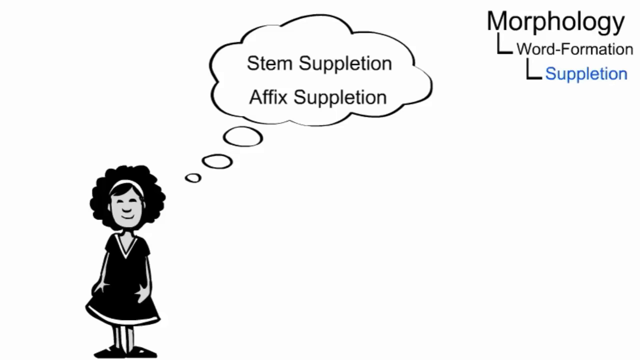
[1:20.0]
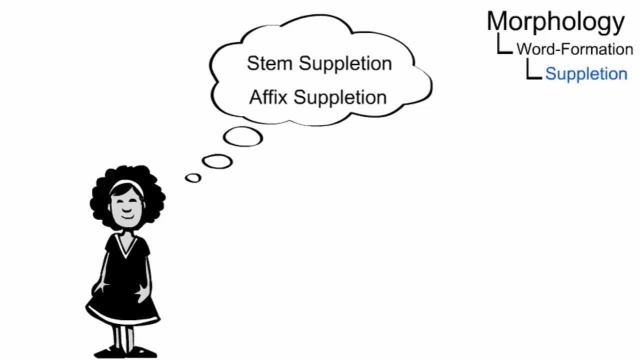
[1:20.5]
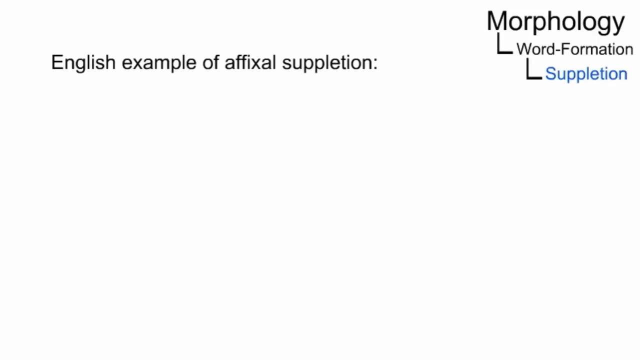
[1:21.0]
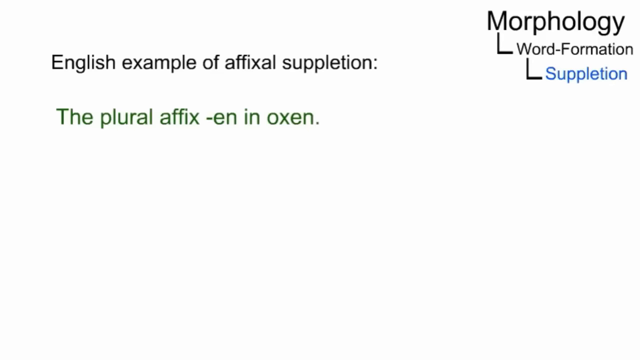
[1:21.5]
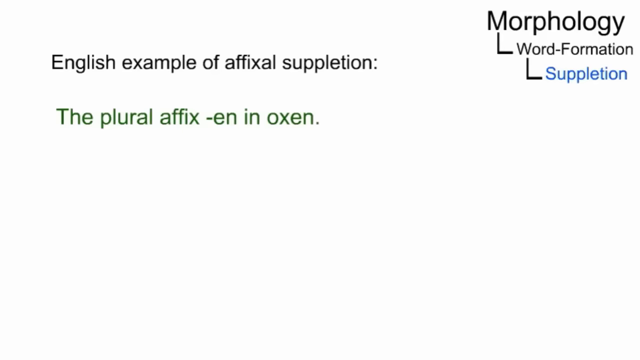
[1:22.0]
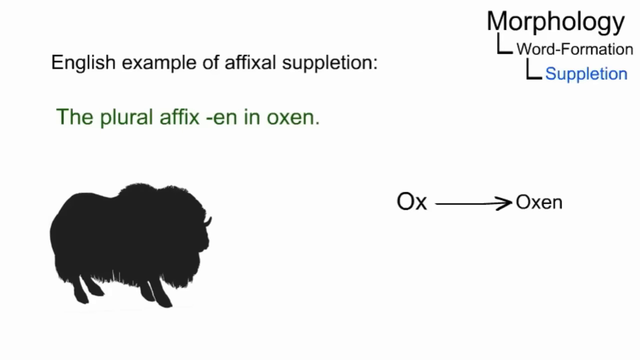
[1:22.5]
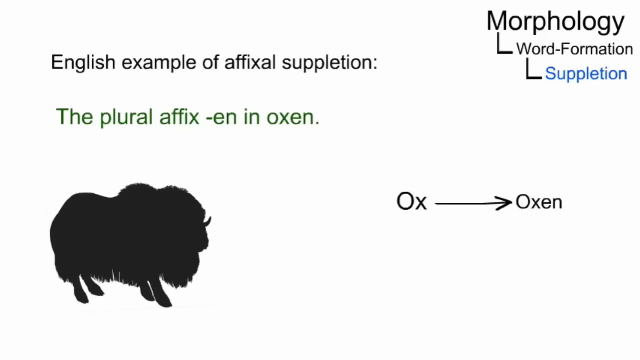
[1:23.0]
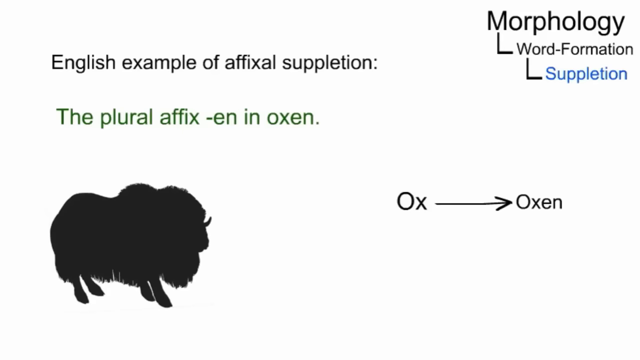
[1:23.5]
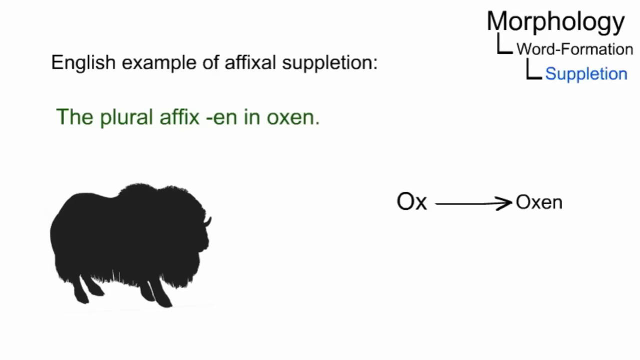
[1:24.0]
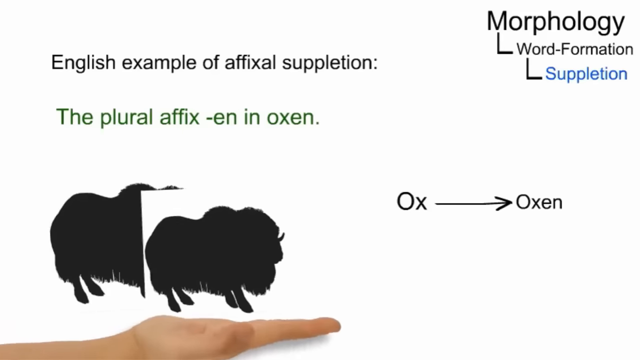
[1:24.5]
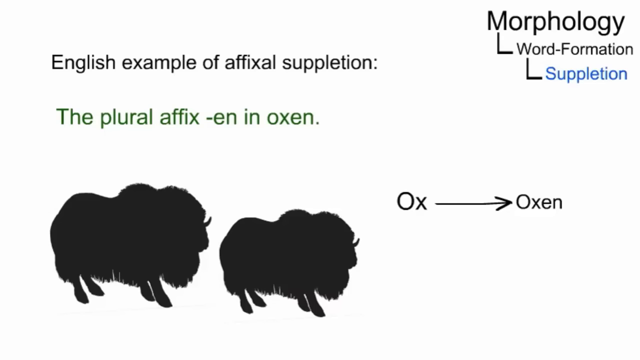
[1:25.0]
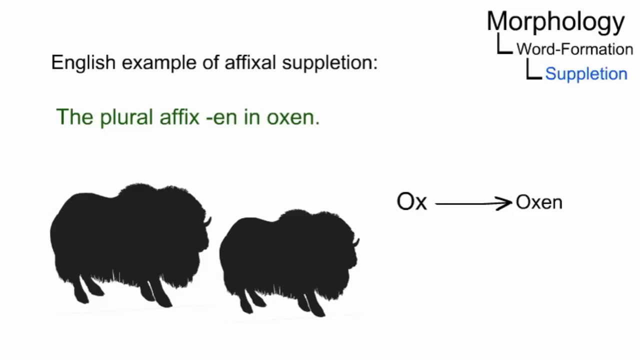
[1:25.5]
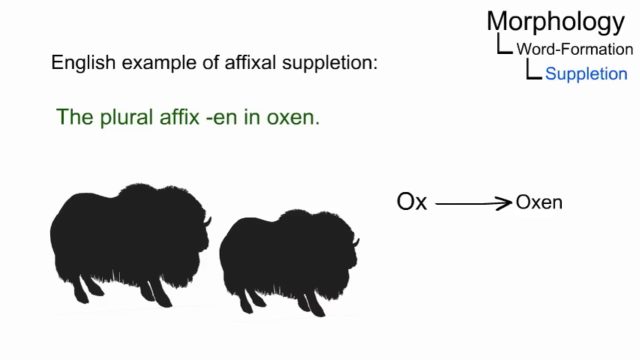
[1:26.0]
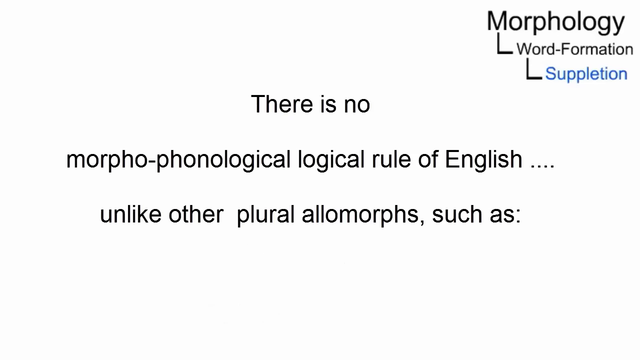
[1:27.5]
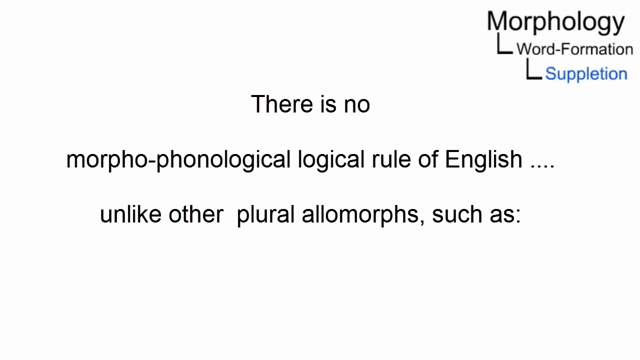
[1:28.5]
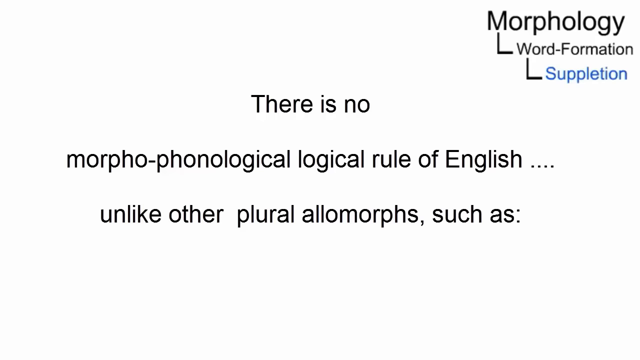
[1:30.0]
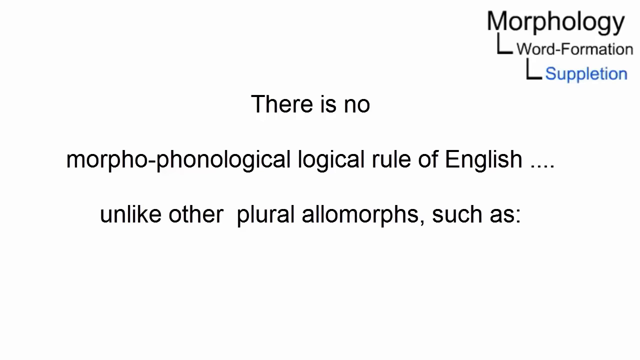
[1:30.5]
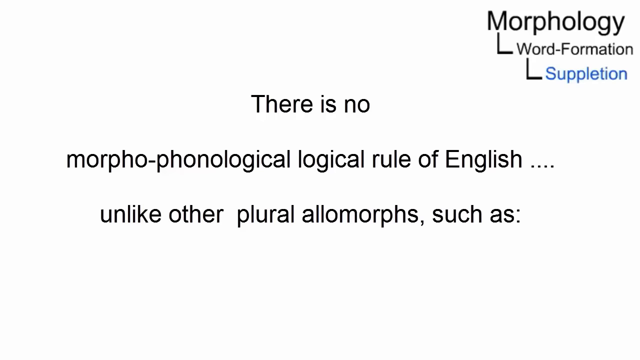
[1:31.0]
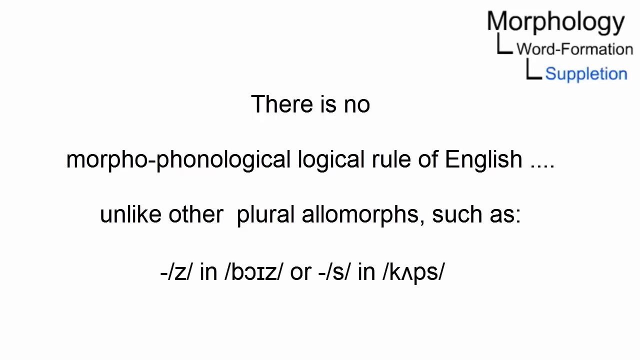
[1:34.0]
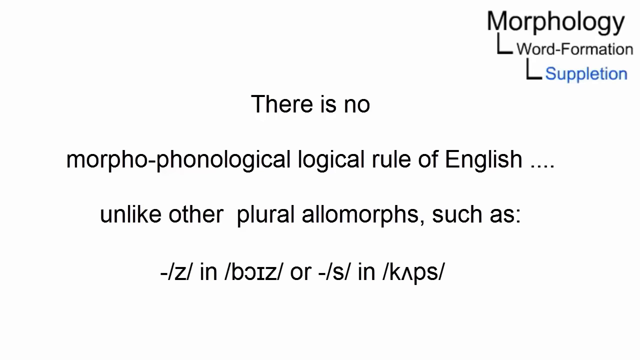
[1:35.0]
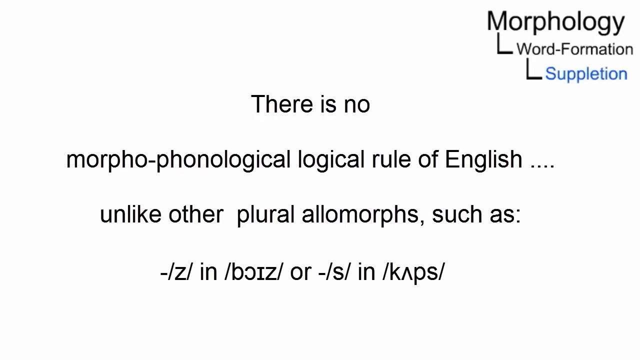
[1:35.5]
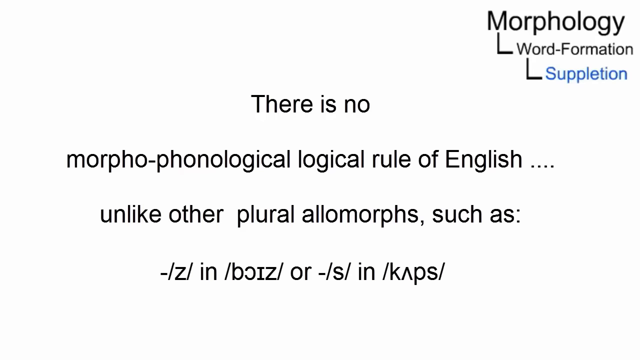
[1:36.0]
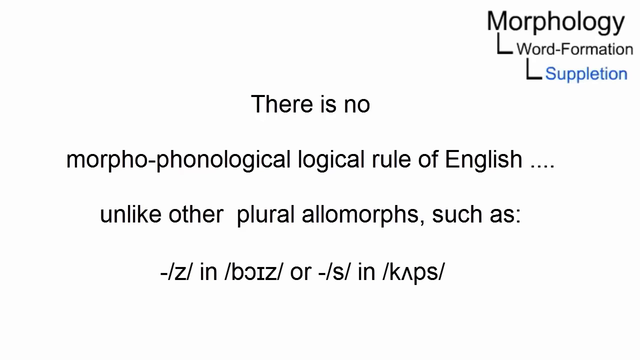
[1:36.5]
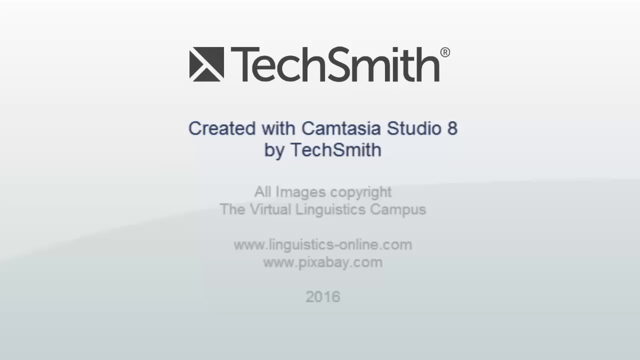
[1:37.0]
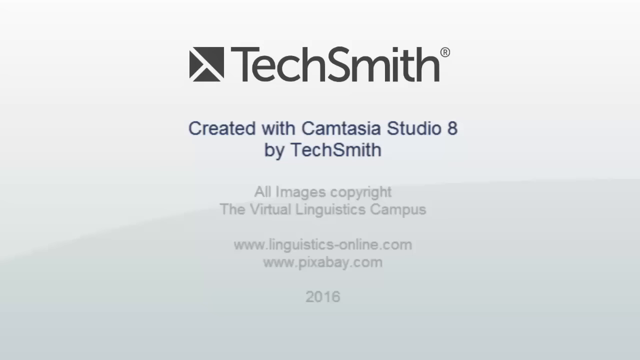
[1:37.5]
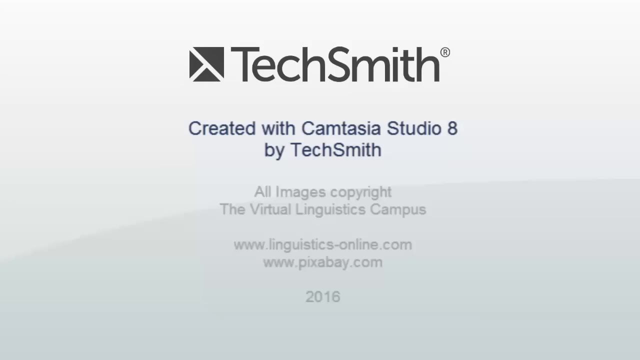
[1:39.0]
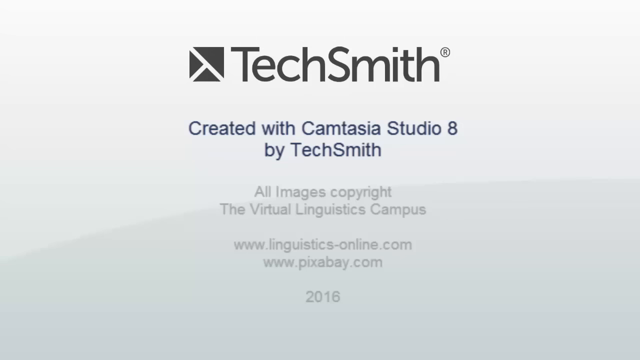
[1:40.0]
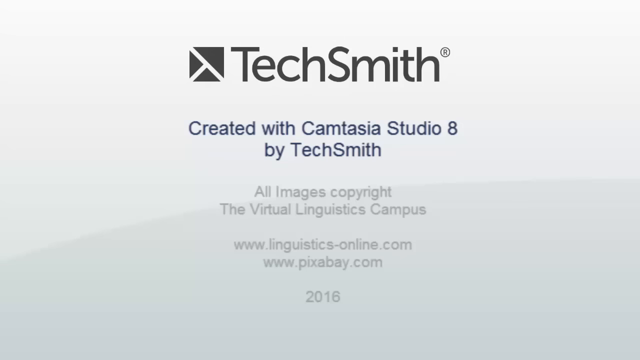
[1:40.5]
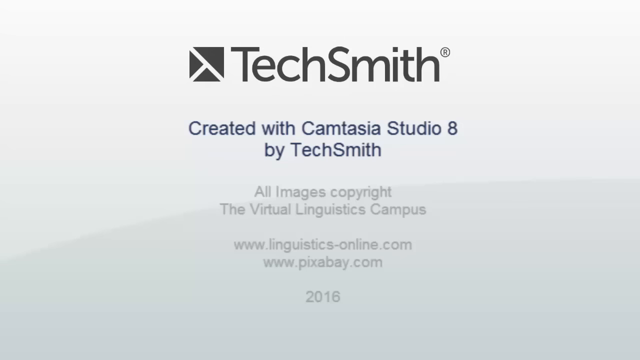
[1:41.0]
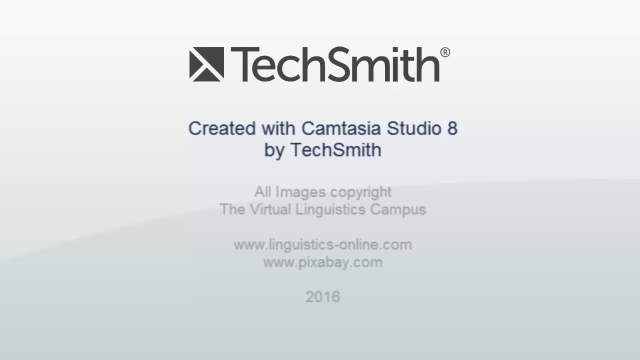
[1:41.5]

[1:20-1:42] A girl with black hair wears a black dress and a white band in her hair. Above her is a cloud with "stem suppletion, affix suppletion" written inside and an arrow pointing to her. At the top of the board are the words "morphology L word formation L suppletion," and also "English example of affixal suppletion," "the plural affix e-n-n," and "ox" and "oxen." A picture of a black ox appears, and another black ox. Other words are written in black. Large black and white text reads "TechSmith" and "created with Camtasia Studio 8 by TechSmith."